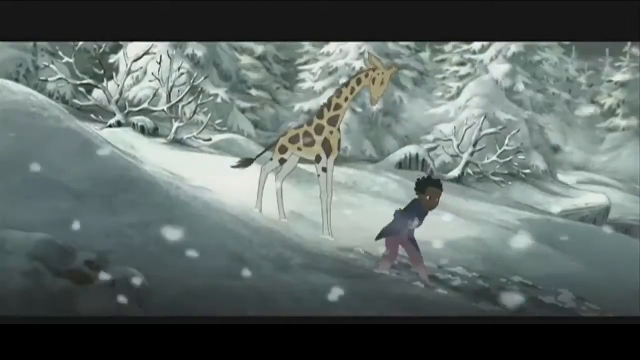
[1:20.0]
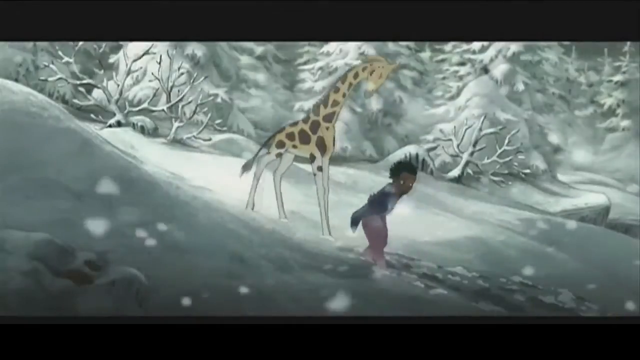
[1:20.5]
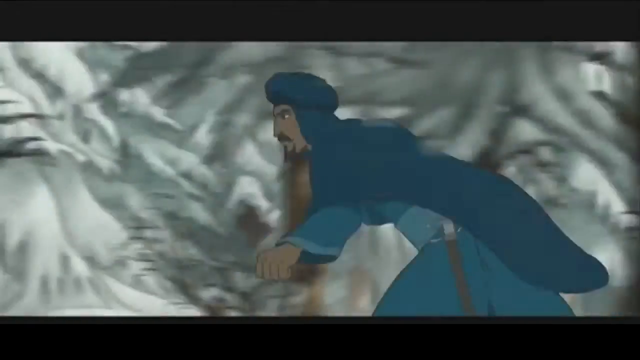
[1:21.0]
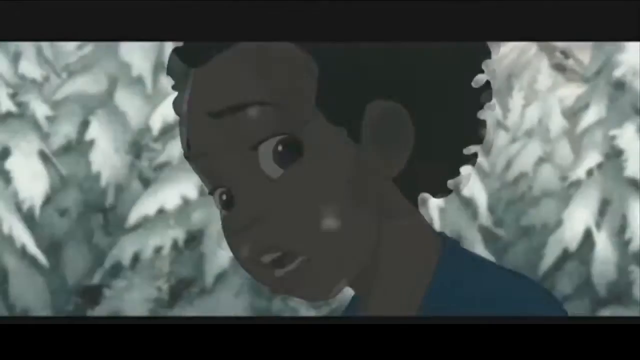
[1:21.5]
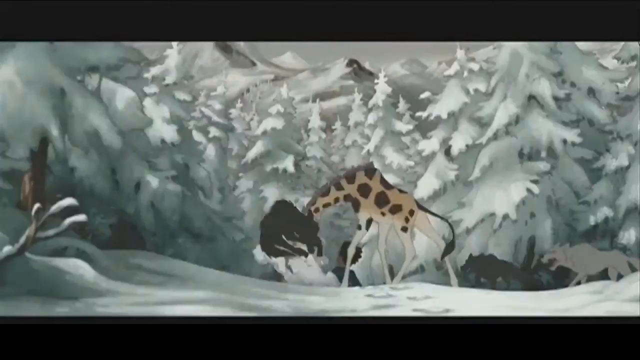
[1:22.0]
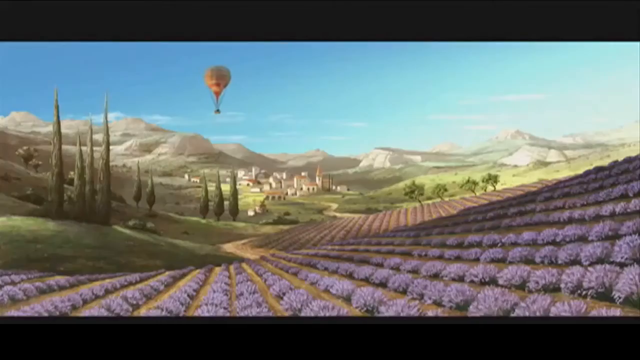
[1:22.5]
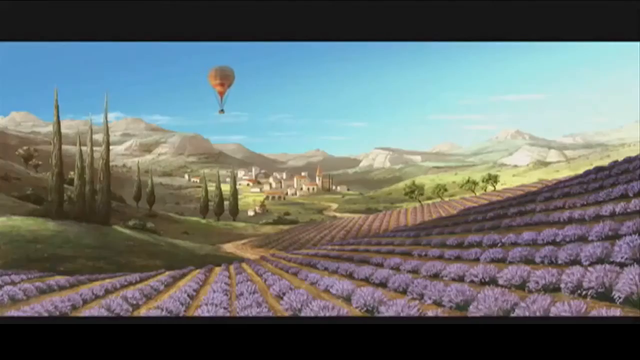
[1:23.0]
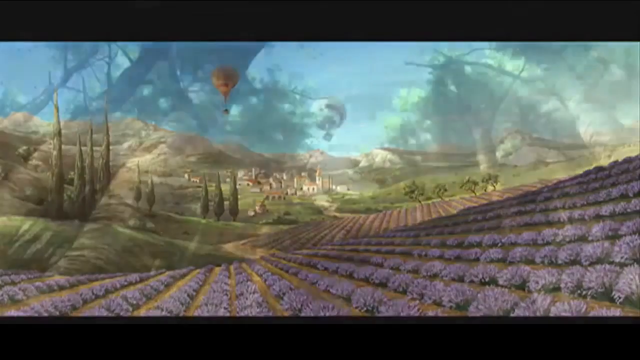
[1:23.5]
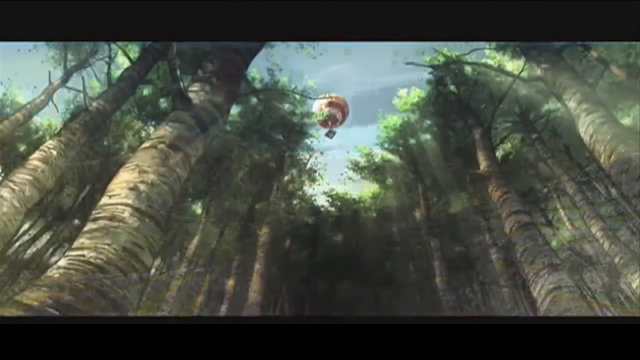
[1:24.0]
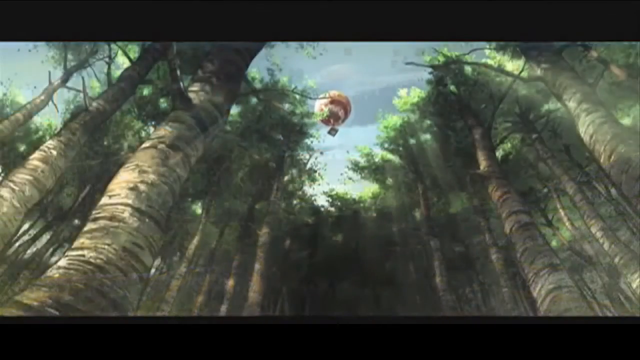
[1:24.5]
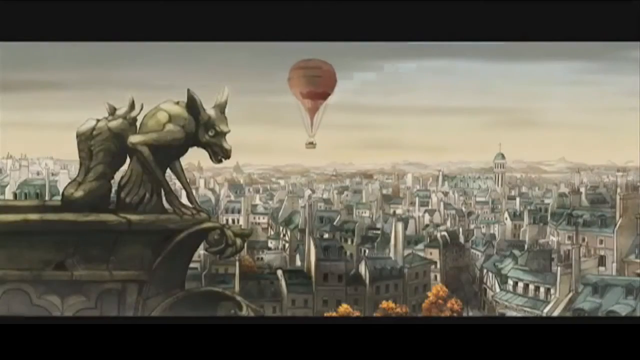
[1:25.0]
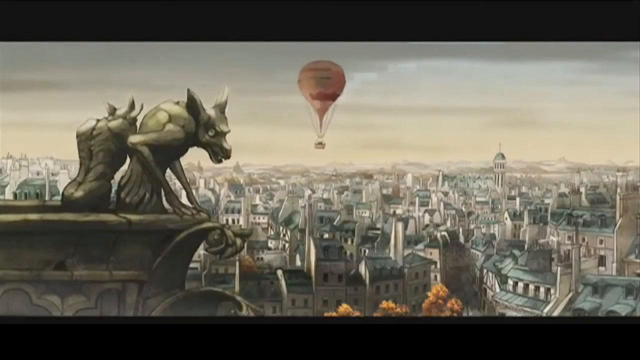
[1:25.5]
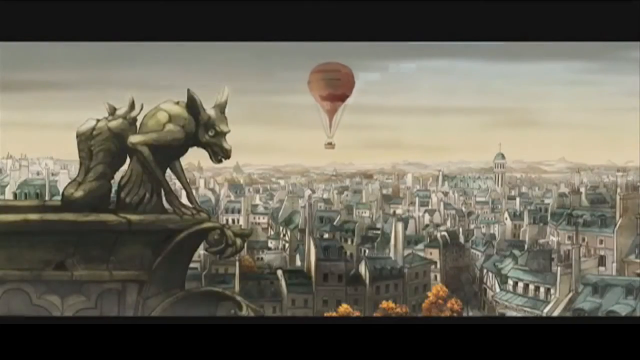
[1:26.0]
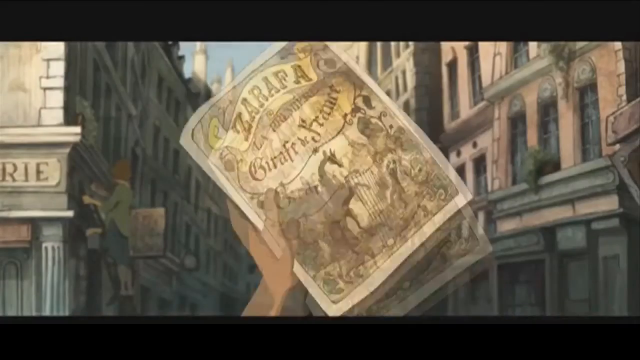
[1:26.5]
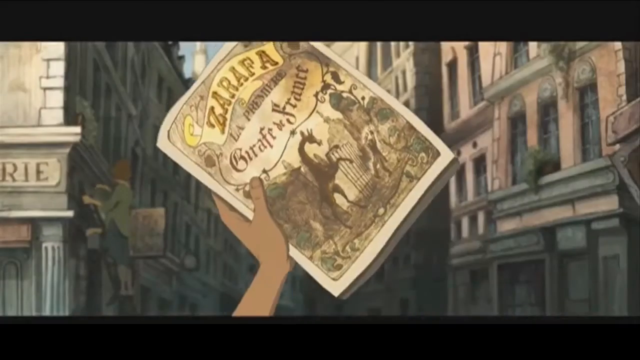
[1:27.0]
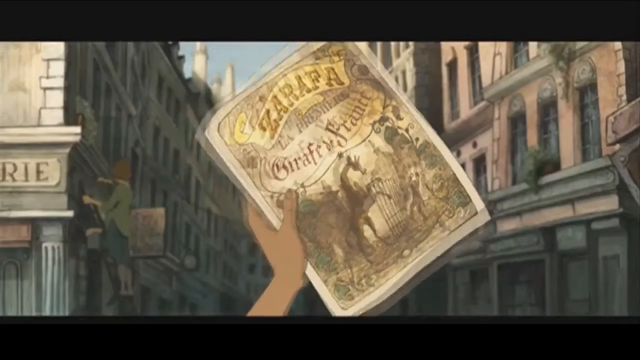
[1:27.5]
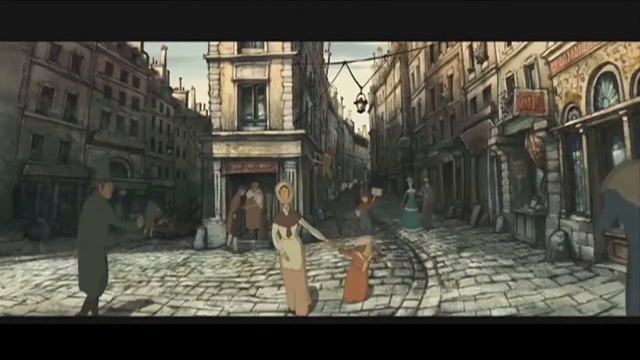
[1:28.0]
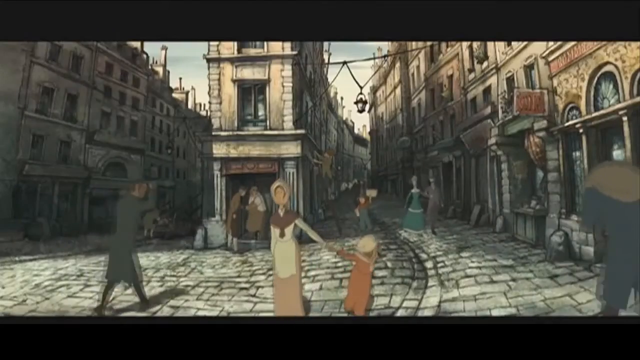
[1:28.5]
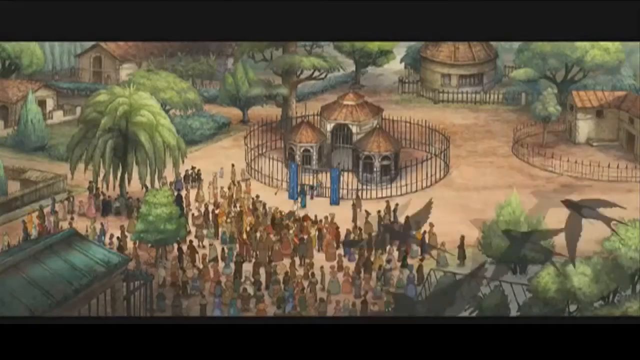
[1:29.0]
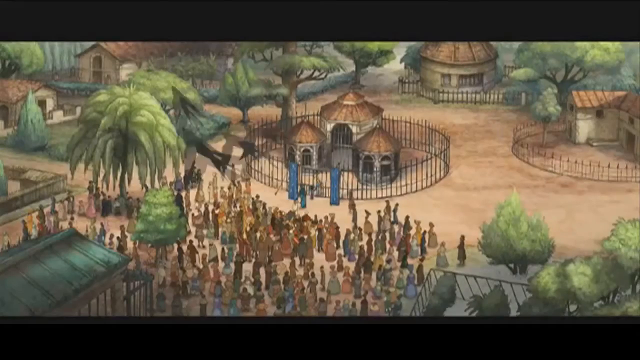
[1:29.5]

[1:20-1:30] Several scenes from the animated film appear to show a group including a young boy, a man in Middle Eastern clothing and a giraffe traveling through different places in a hot air balloon. First, the young boy and the giraffe are on a snowy mountainside, and the man runs toward them as a wolf approaches; the giraffe knocks the wolf away with its neck. The hot air balloon floats over a landscape that looks like Italy, with fields of purple plants that could represent a vineyard and soft hills in the background, surrounded by tall conical bushes and trees. The balloon then passes over what looks like a rainforest, just above the tops of some very tall, densely leaved trees. Finally it appears to pass over a European city that looks like Paris; in the foreground is the corner of a building with two gargoyles looking over the edge. Someone holds up the front of what looks like a program for a show, with writing in French meaning Zarafa the French Giraffe. Next comes a scene that looks like a cobblestone street in Europe, with two roads lined with houses on either side and people walking down the streets in clothing that looks like it is from the 19th century. A final scene shows little round buildings with thatched roofs surrounded by small round gates, with a group of people standing around.